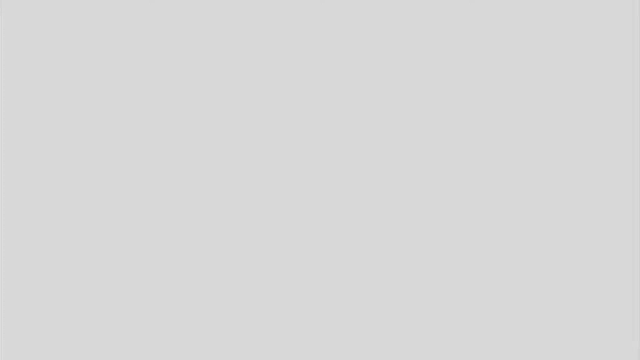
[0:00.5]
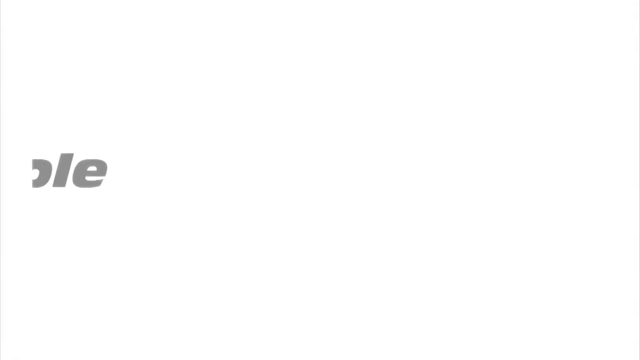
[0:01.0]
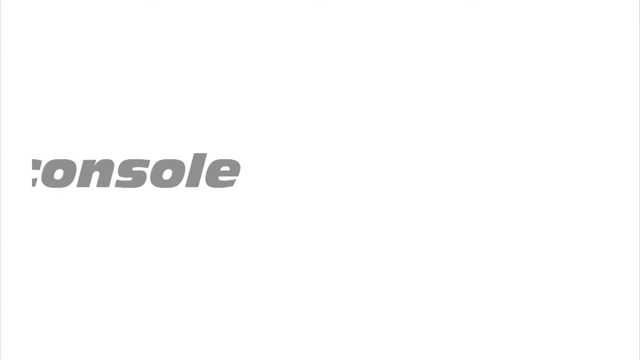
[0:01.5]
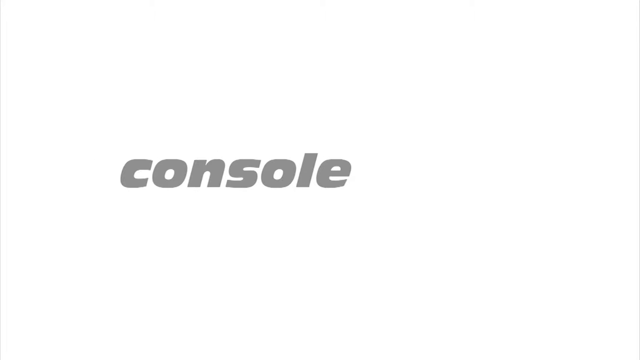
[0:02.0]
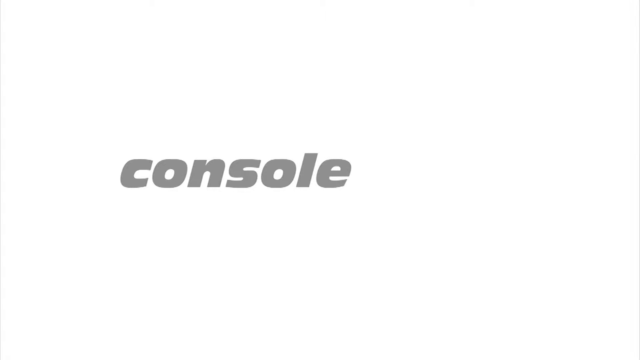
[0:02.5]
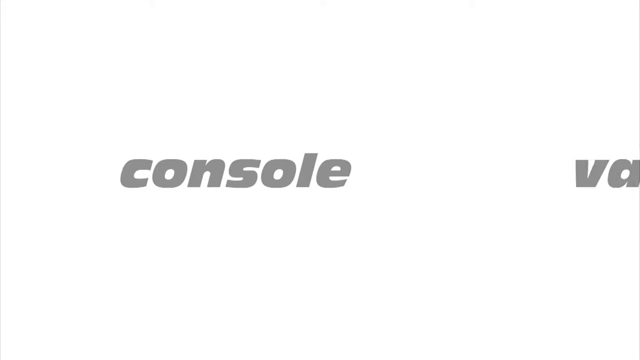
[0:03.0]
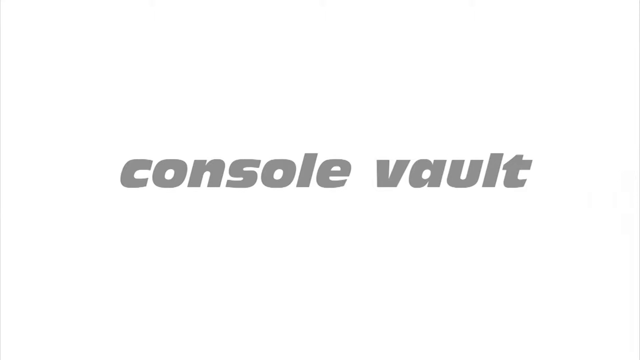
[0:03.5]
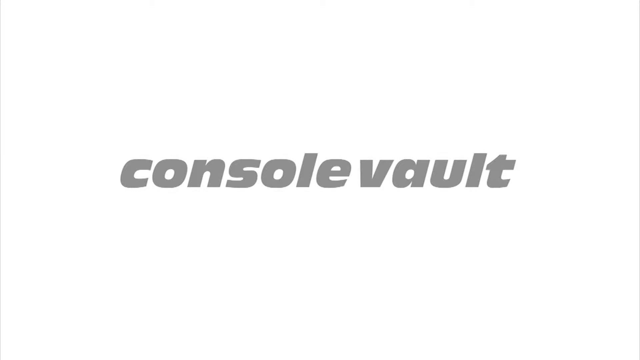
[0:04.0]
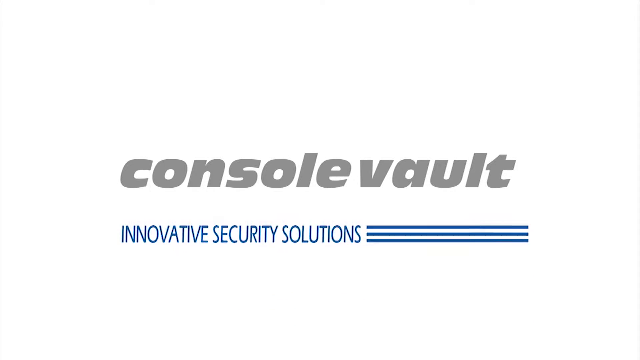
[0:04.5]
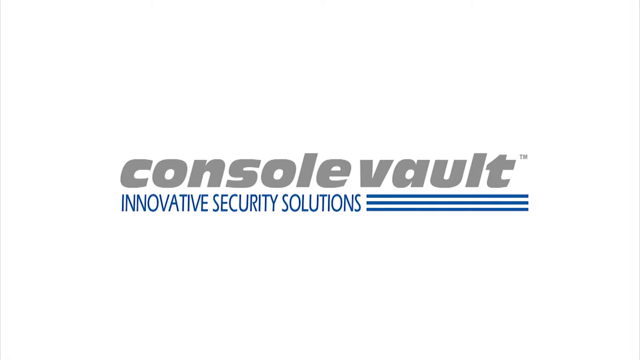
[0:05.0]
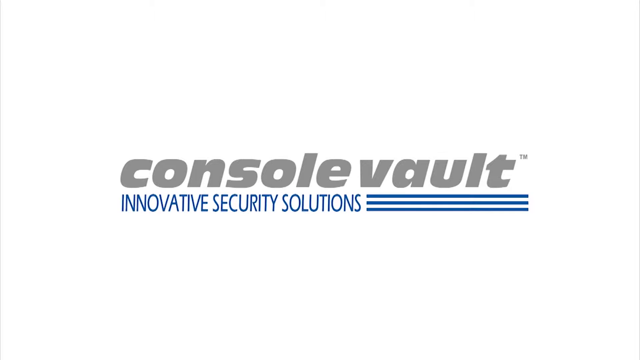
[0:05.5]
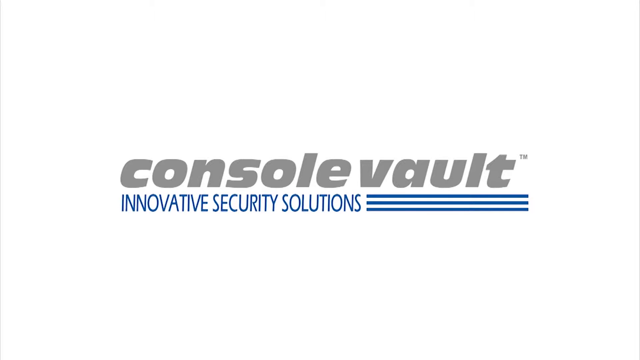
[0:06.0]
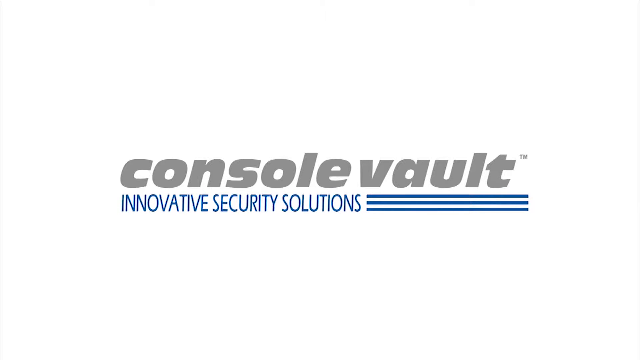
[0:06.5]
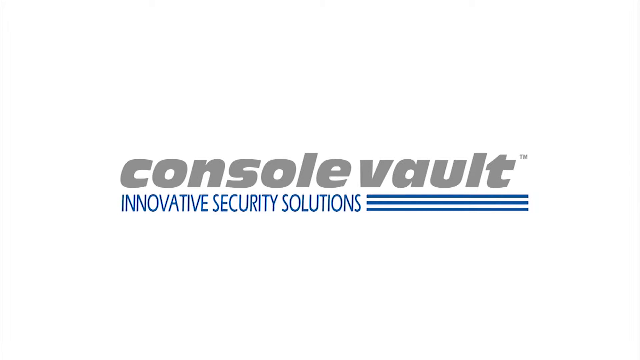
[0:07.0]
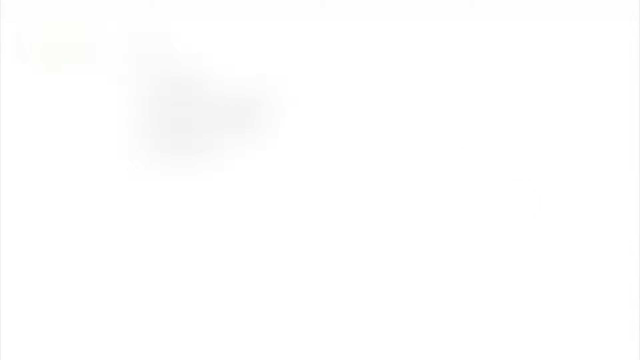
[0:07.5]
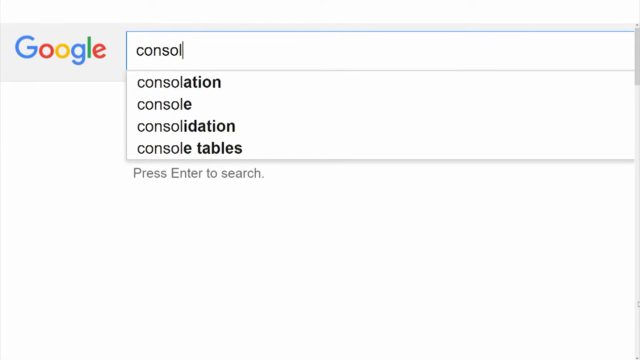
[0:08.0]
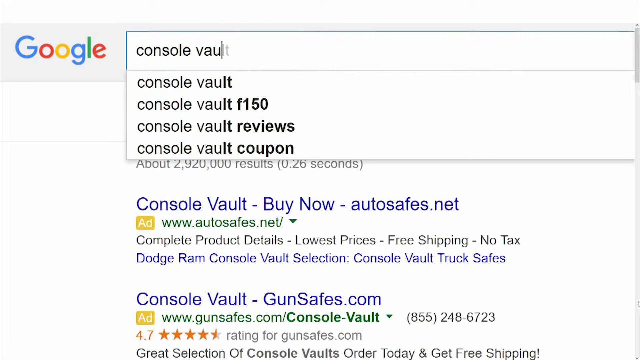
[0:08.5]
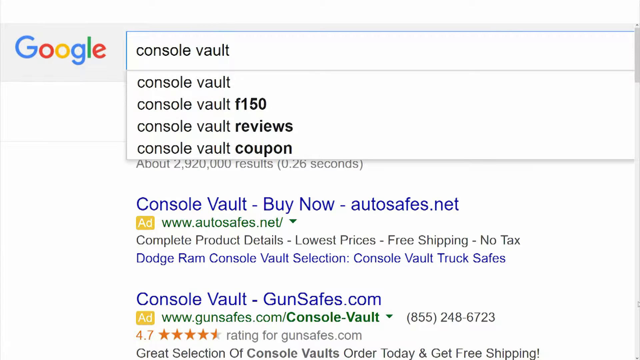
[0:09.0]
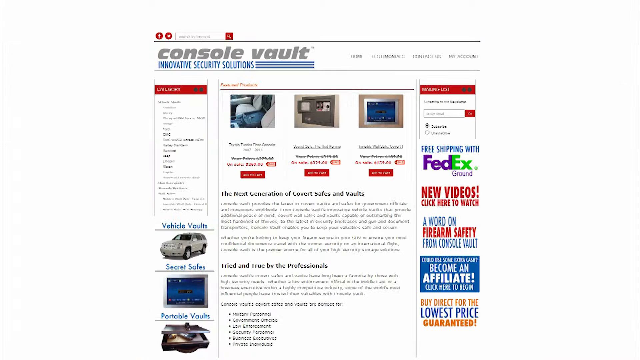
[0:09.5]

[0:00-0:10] The video opens on "console vault," possibly the name of the creator, with "innovative security solutions" in blue font underneath; Console Vault is most likely the logo and name of the company. A zoomed-in screen recording of the Google search bar appears, and "console vault" is typed in. The Console Vault website is then shown on a white background, with the logo visible in the top left corner and a lot of text and ads on both sides. It appears that Console Vault creates security solutions such as home monitoring systems, vaults and safes.